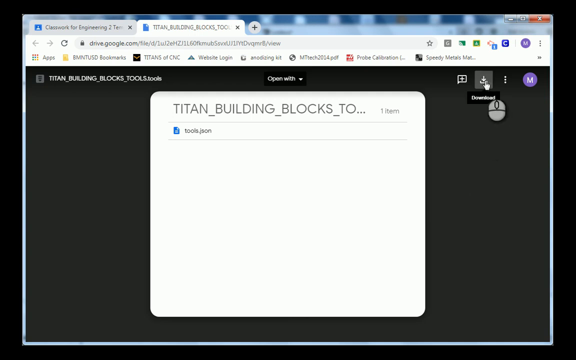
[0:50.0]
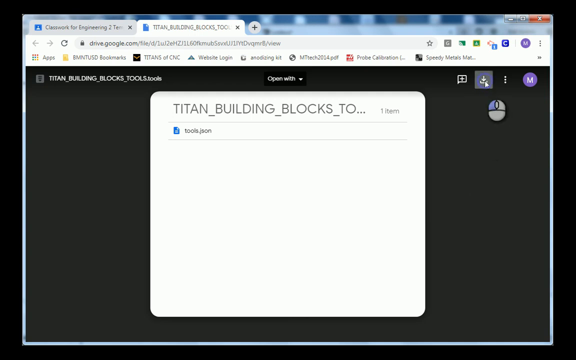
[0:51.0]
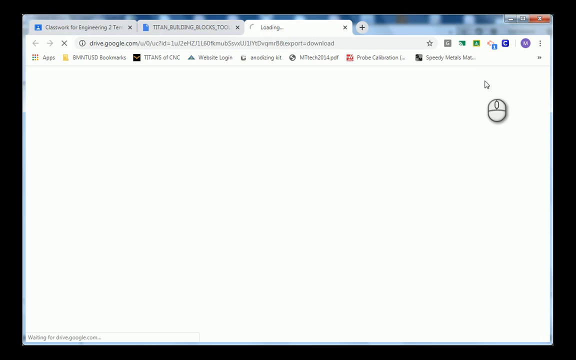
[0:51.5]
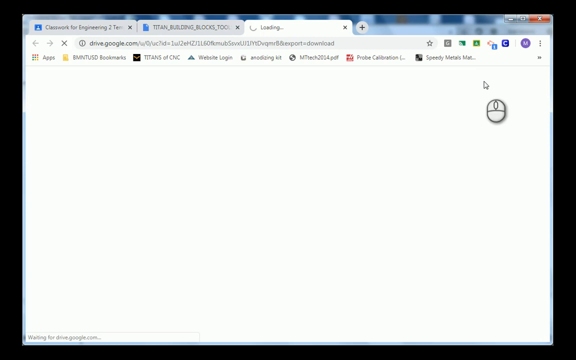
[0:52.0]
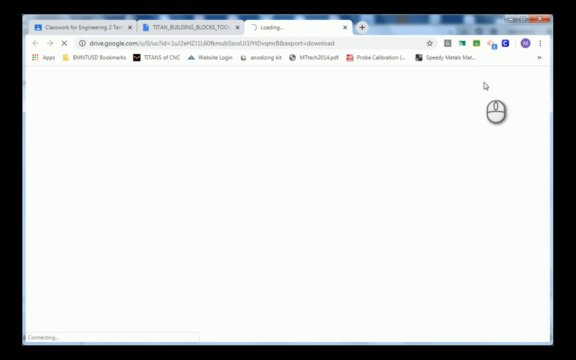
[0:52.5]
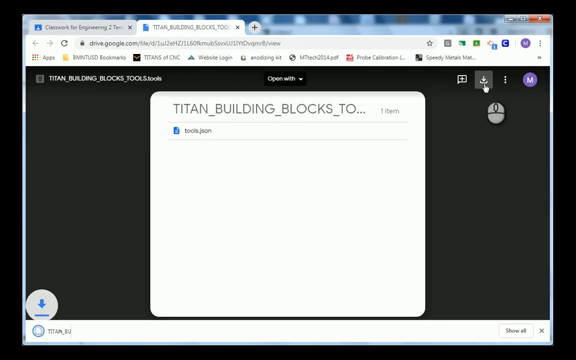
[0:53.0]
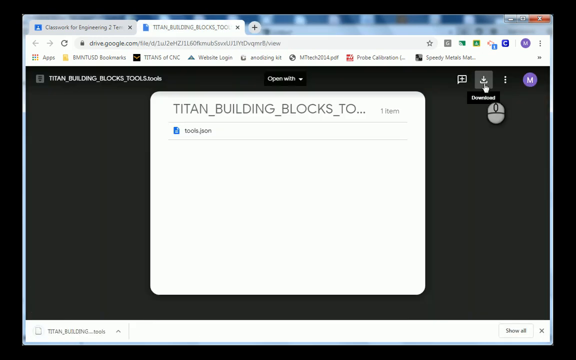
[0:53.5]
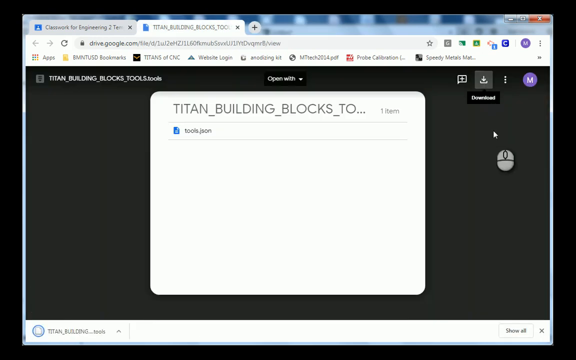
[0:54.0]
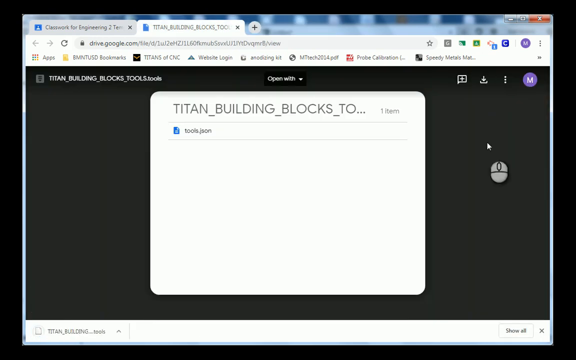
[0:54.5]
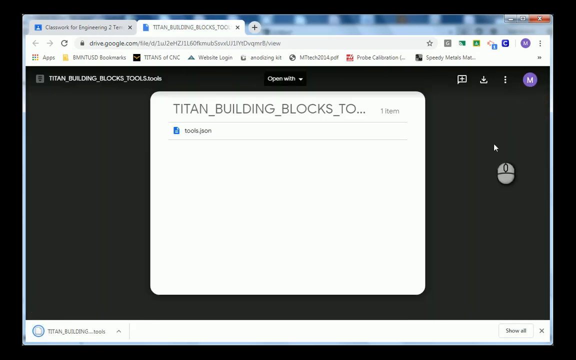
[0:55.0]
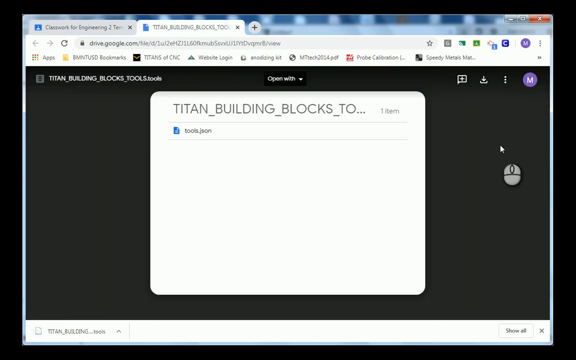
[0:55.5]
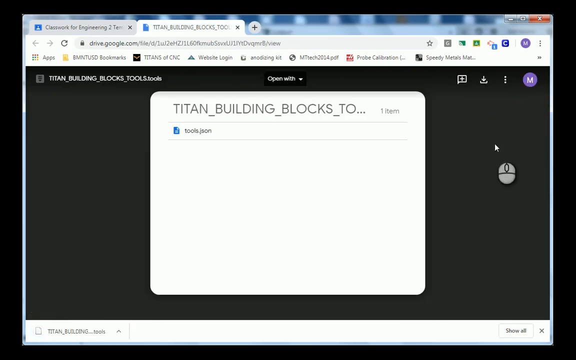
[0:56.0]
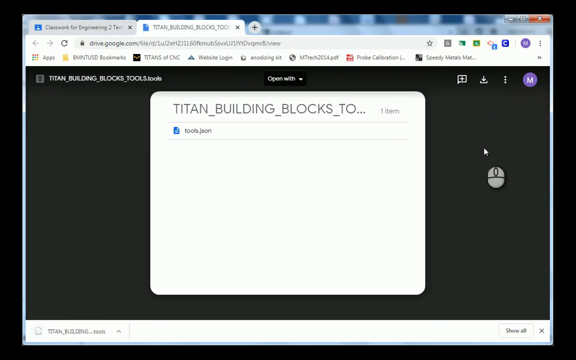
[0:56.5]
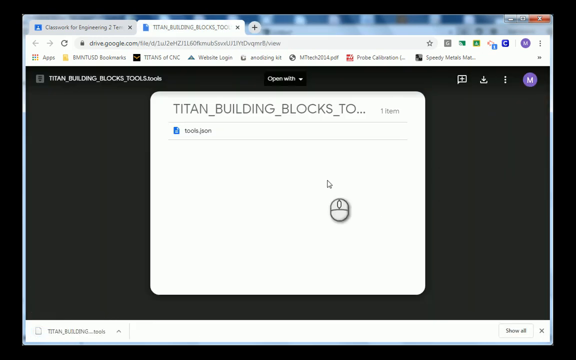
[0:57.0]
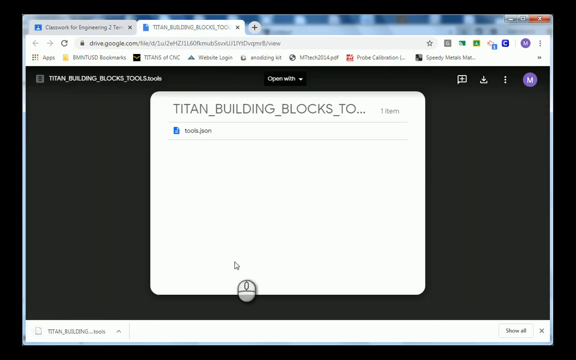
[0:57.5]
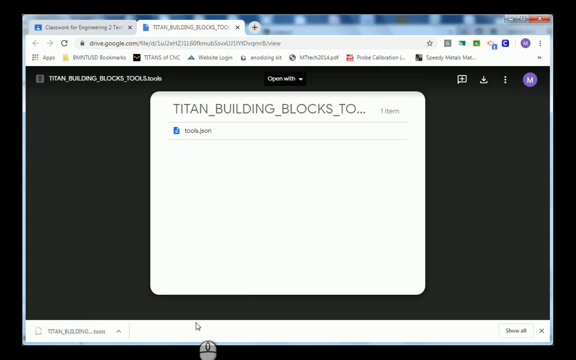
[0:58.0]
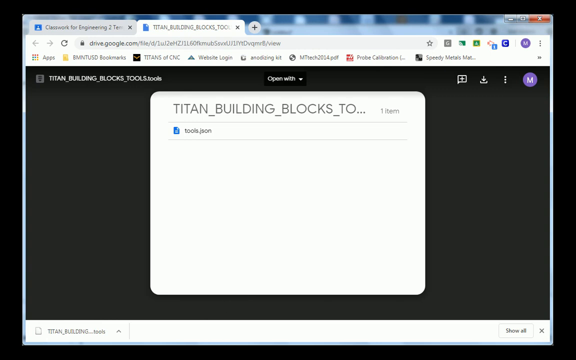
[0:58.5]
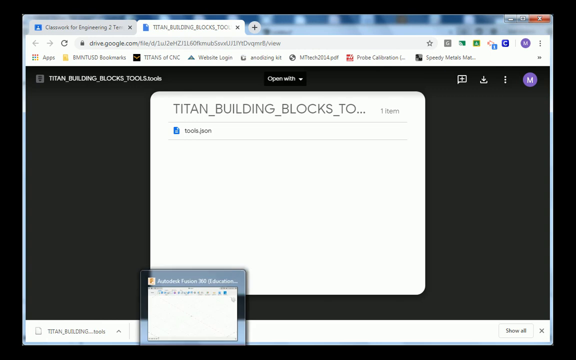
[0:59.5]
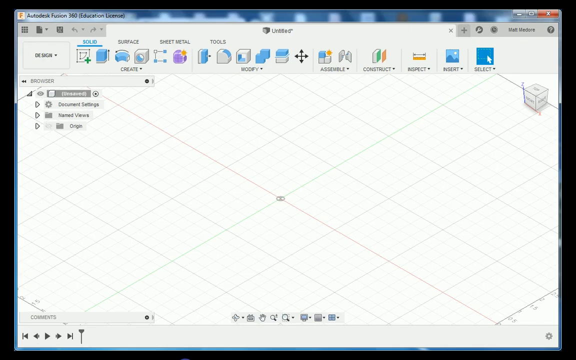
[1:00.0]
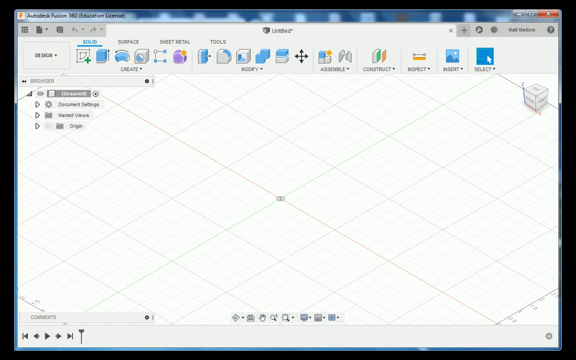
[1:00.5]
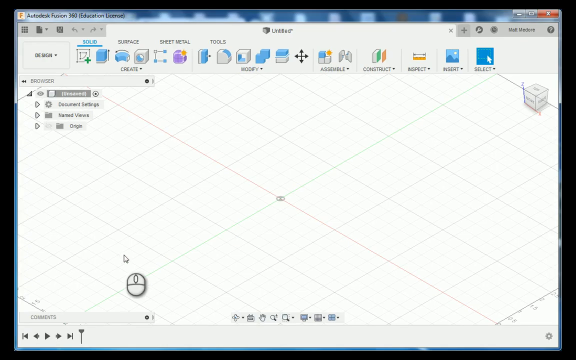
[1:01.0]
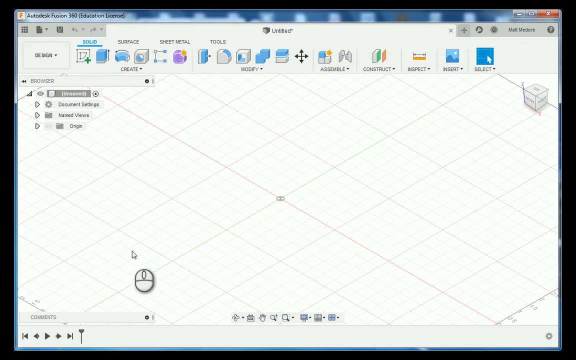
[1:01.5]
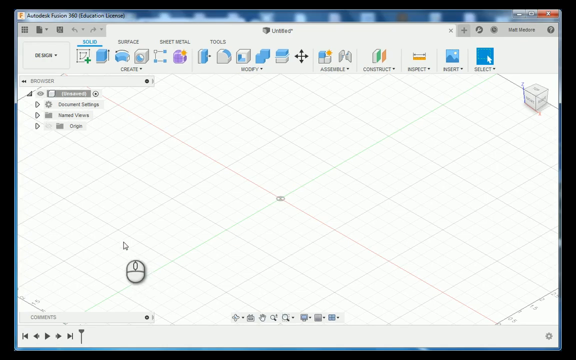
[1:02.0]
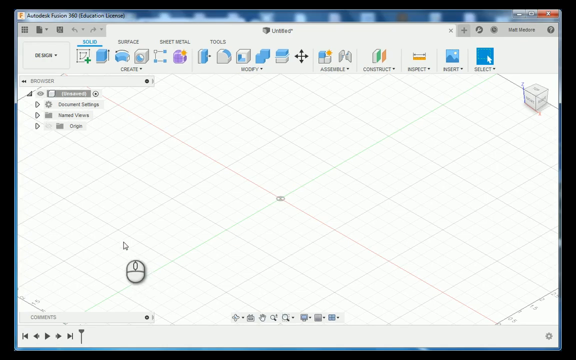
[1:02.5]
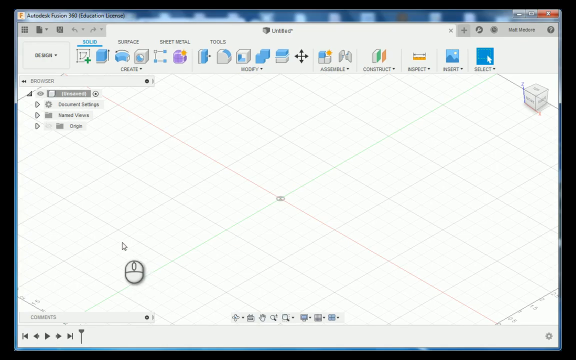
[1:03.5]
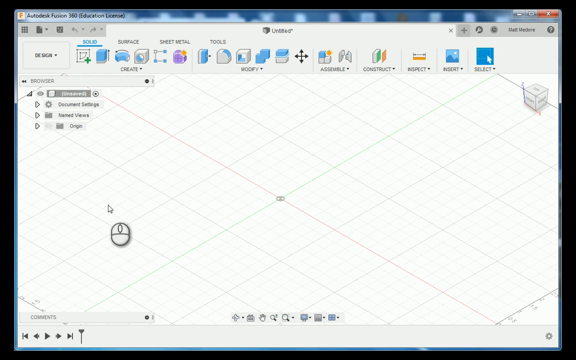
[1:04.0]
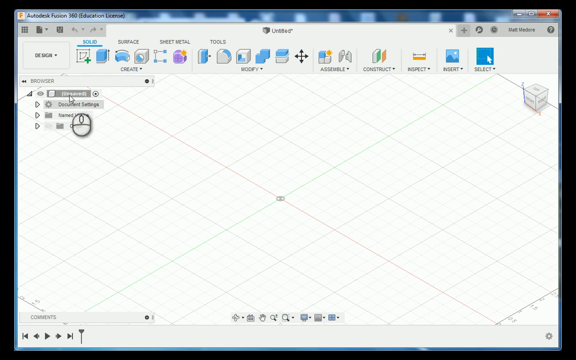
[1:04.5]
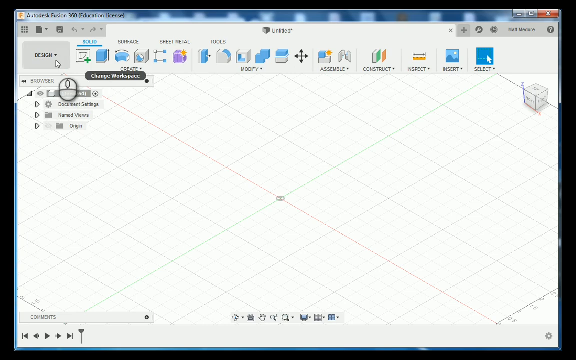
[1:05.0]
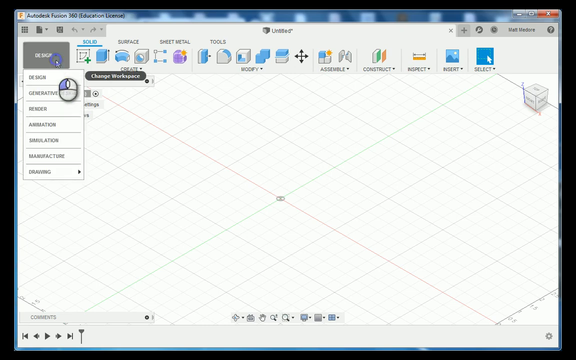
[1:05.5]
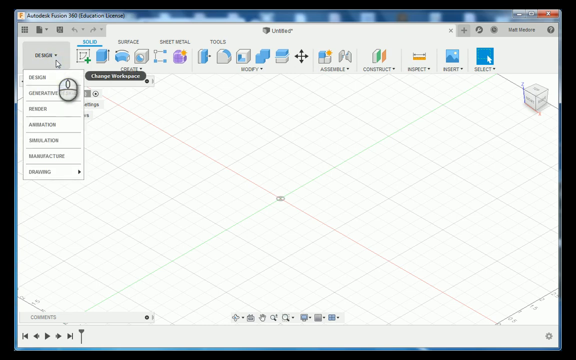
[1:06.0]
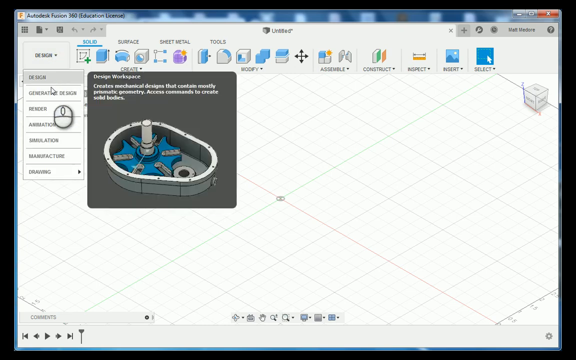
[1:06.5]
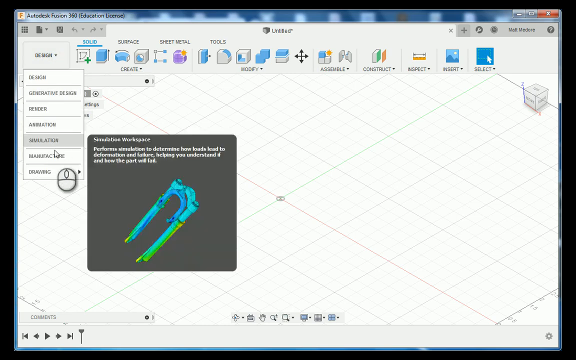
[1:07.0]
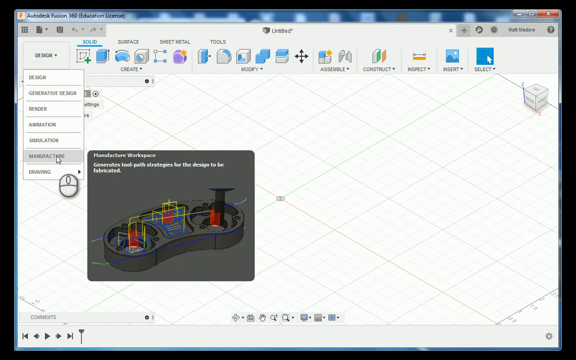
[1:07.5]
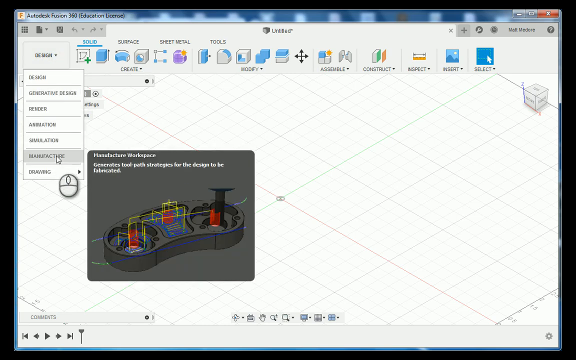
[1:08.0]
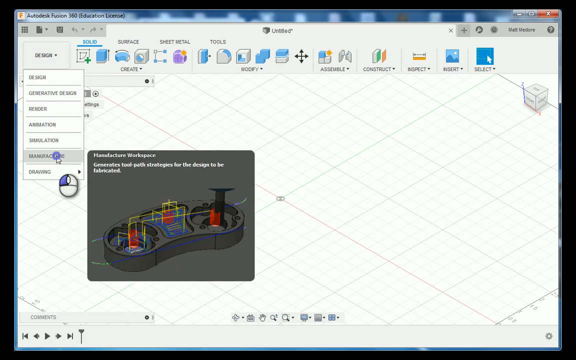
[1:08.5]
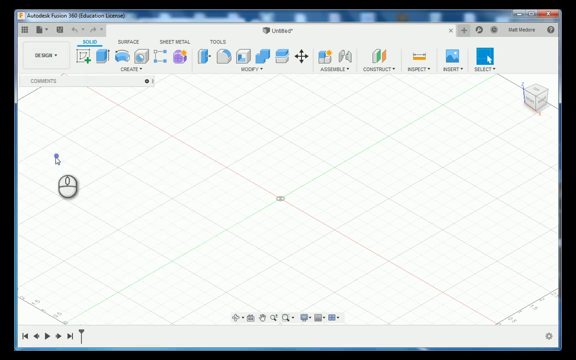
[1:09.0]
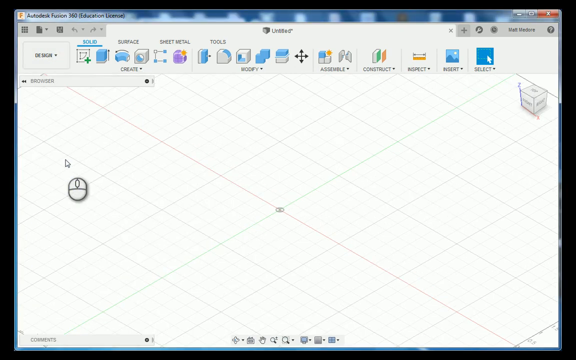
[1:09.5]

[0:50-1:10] A Google Drive download page displays a file called "titan-building-blocks-tools.tools" and shows that it contains a JSON file named "tools". The user mouses over the download option in the top right of the page and clicks it, which opens a new tab that quickly disappears as the file downloads at the bottom left. The user then opens the Autodesk Fusion 360 program from the taskbar at the bottom, goes to the design drop-down menu, mouses over "Manufacturer Workspace" and clicks that option. A tooltip for the Manufacturer Workspace says it generates toolpath strategies for the design to be fabricated and shows a 3D model with various cuts, lines and shapes on it. Meanwhile, the downloaded file has finished downloading. After the click, the menu disappears.